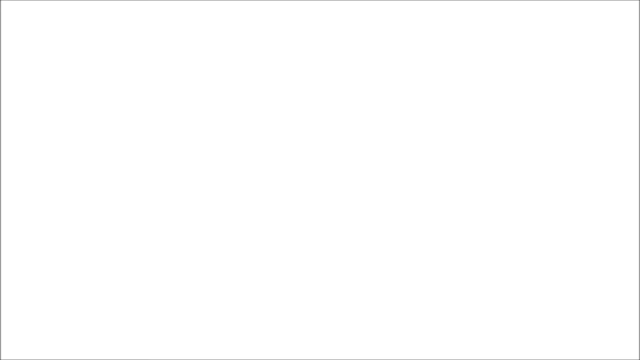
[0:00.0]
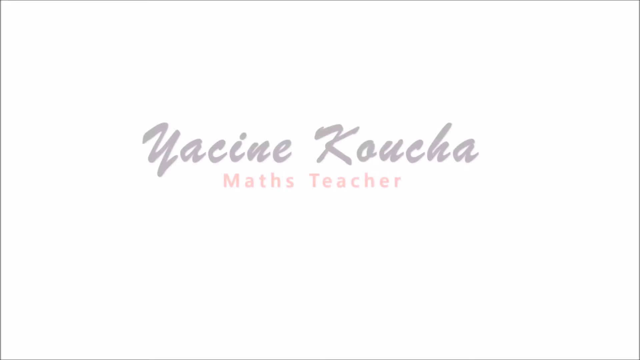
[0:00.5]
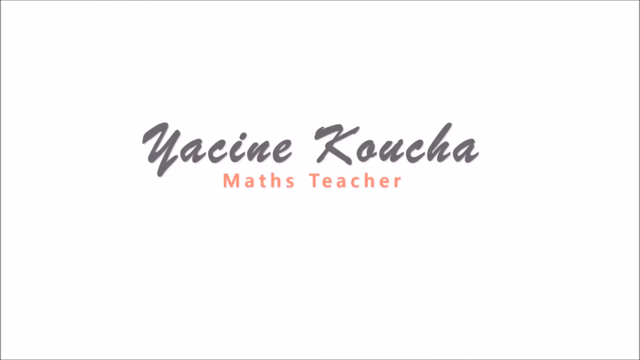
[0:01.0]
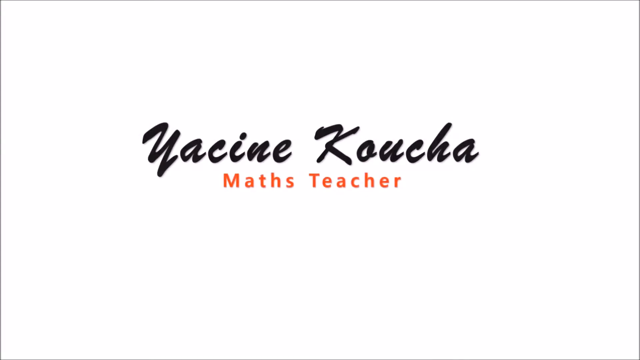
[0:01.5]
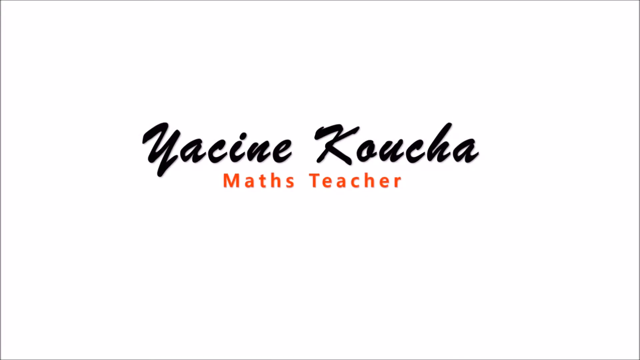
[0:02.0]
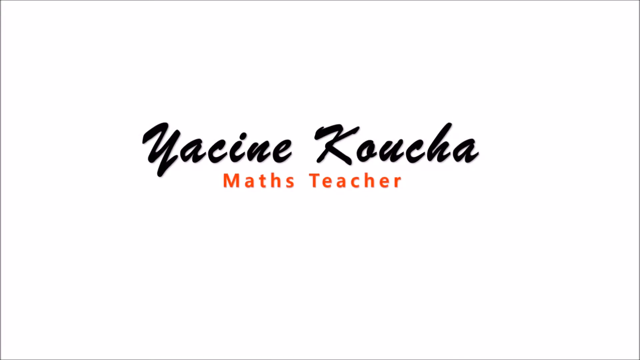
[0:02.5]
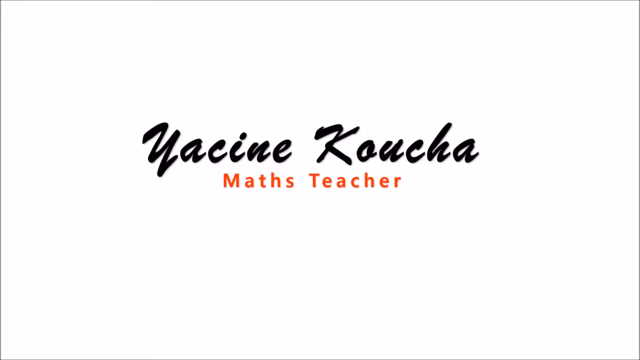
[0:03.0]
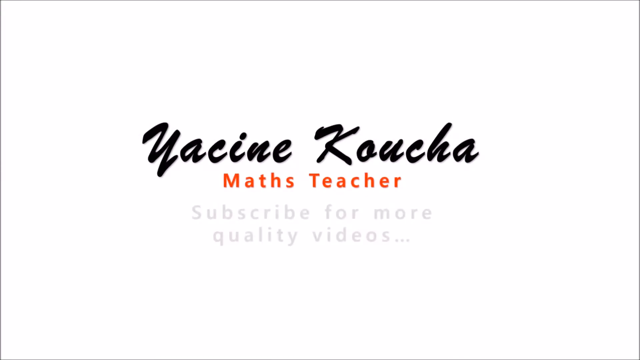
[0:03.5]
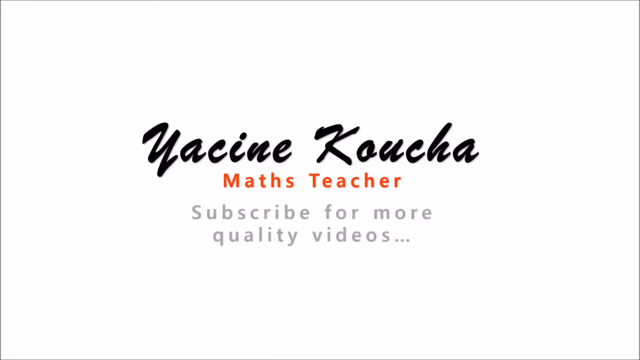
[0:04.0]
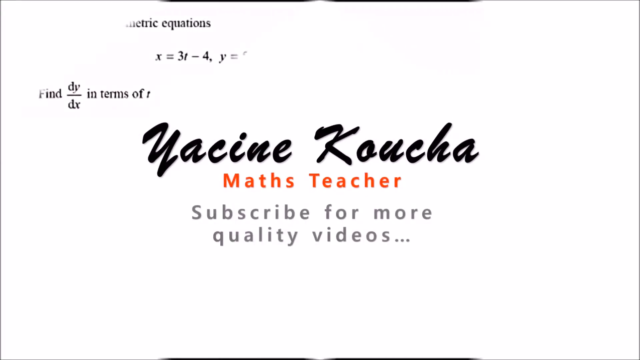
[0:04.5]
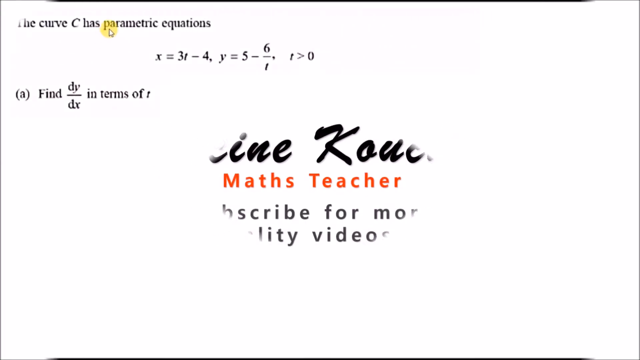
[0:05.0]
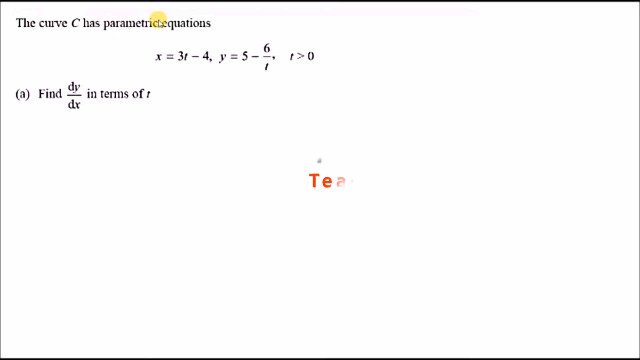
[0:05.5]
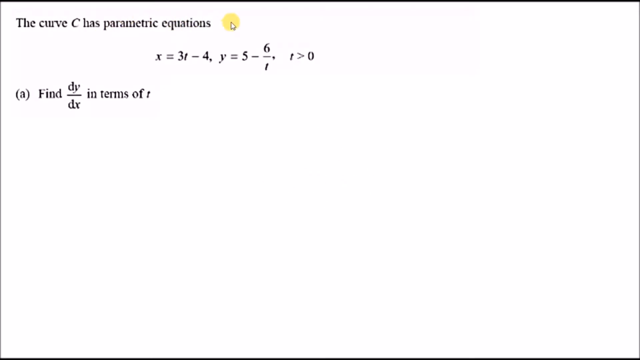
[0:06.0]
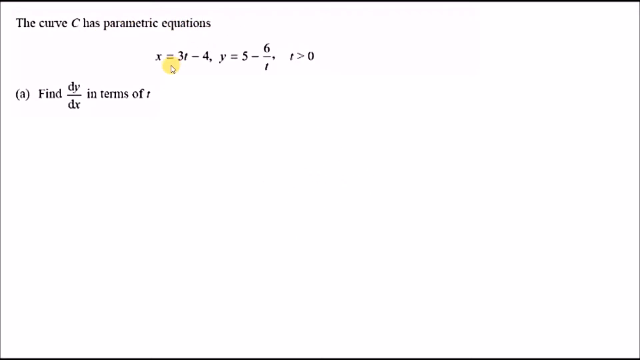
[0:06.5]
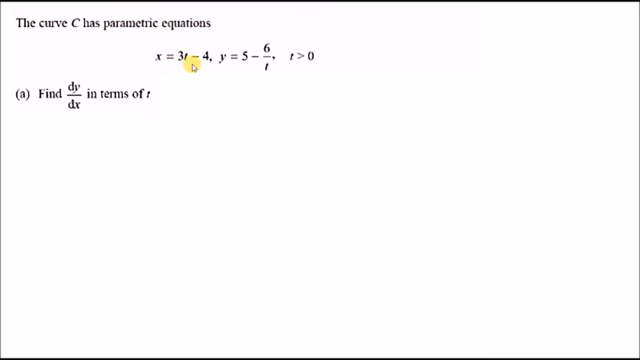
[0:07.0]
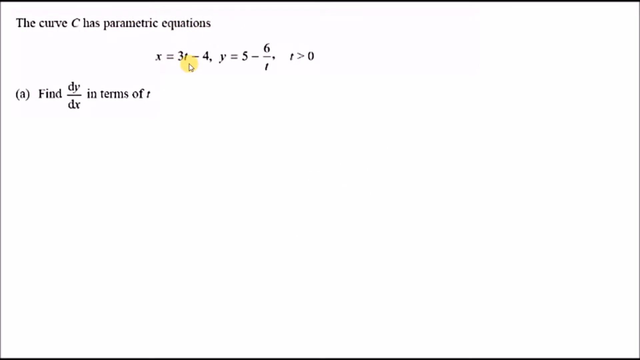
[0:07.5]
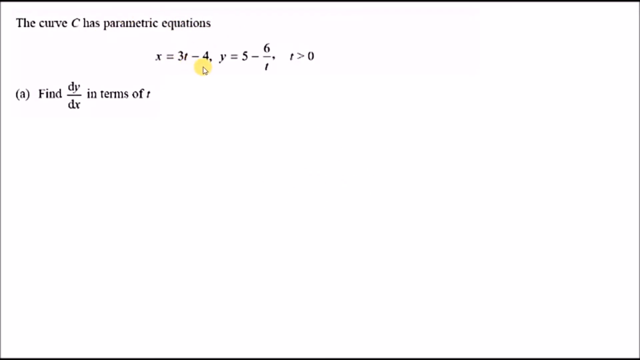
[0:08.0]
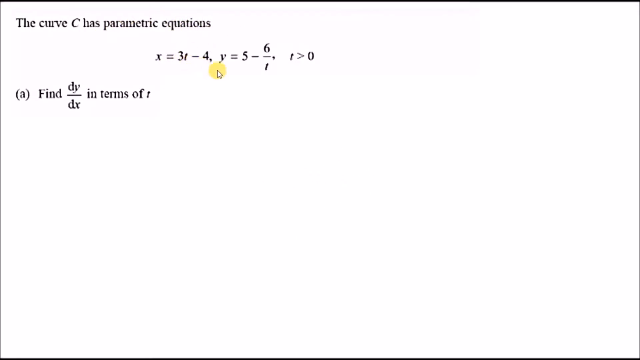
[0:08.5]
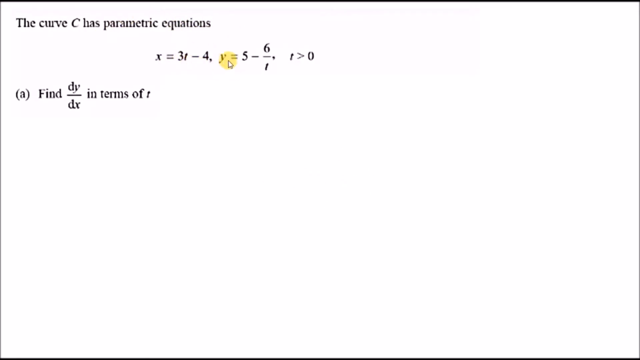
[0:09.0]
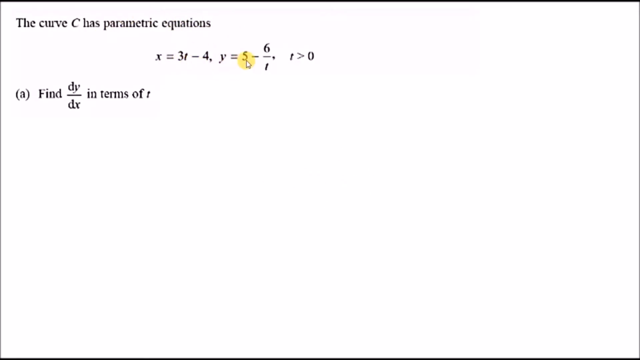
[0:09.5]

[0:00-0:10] A white screen opens the video, then text appears with the name Yacine Koucha and, underneath in smaller orange text, "Maths Teacher." Below that it reads "Subscribe for more quality videos." That screen disappears and a math problem appears: it concerns a curve given by parametric equations and asks to find dy over dx in terms of t. A cursor highlights different parts of the parametric equations, working from left to right to show each part.